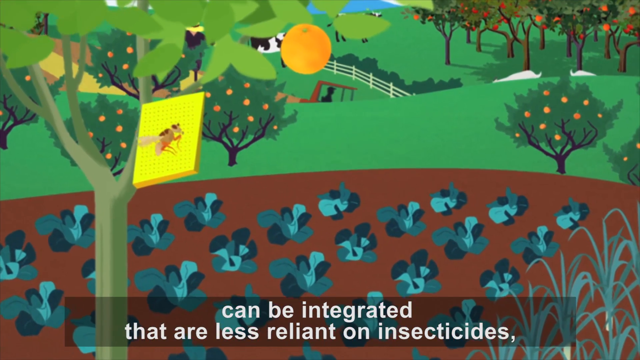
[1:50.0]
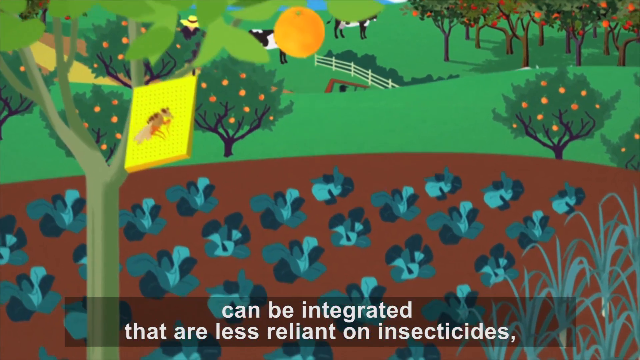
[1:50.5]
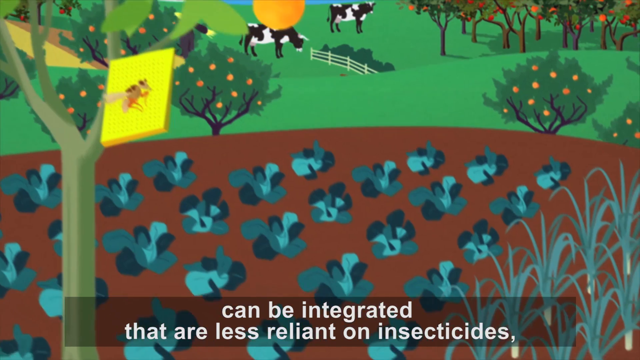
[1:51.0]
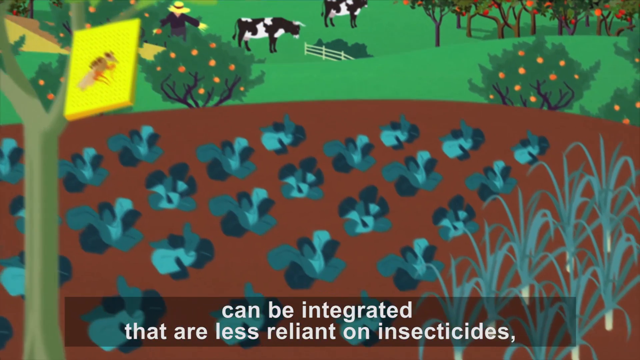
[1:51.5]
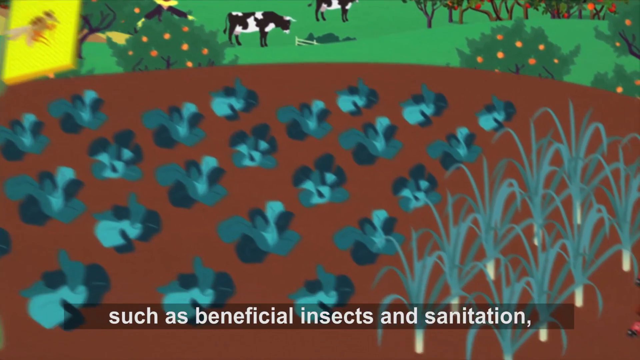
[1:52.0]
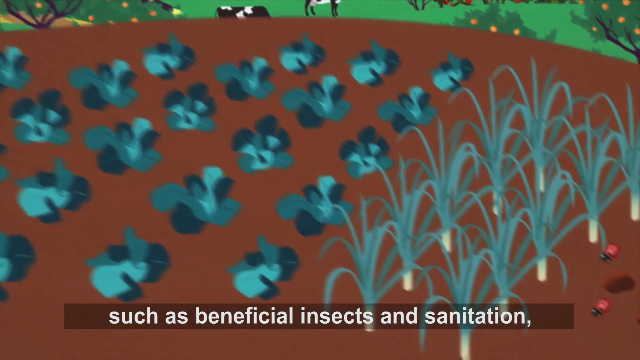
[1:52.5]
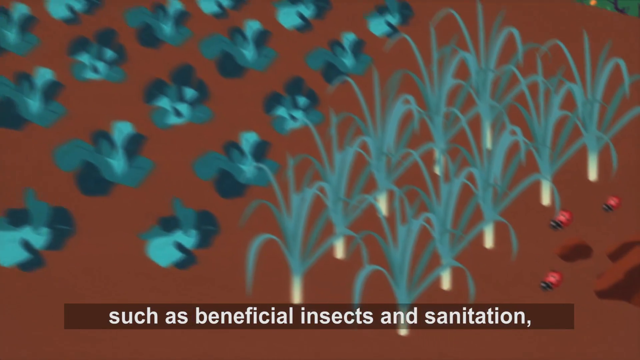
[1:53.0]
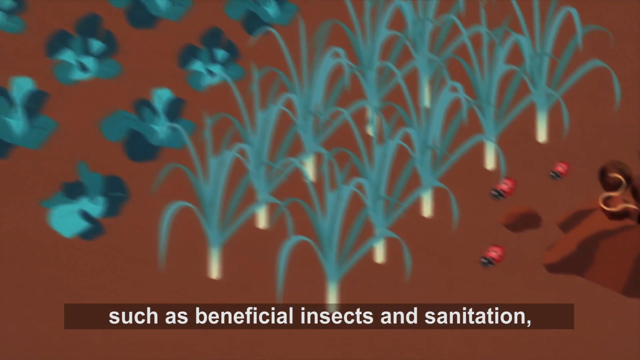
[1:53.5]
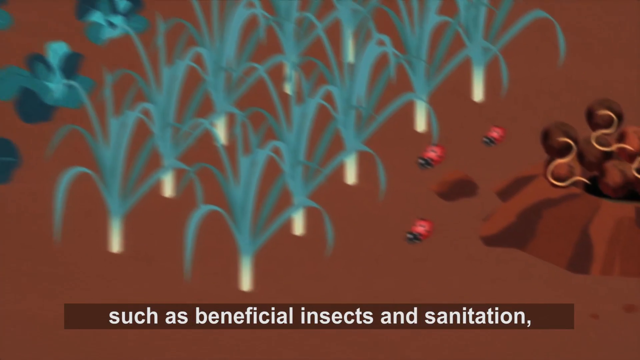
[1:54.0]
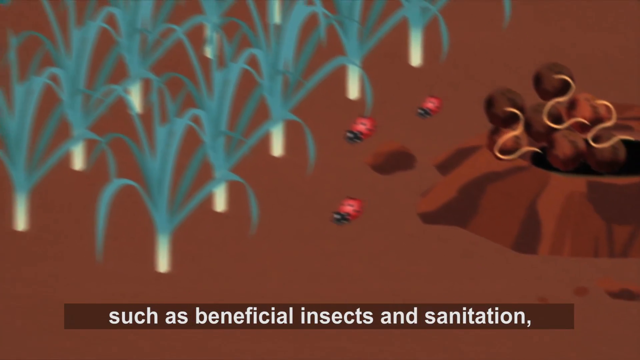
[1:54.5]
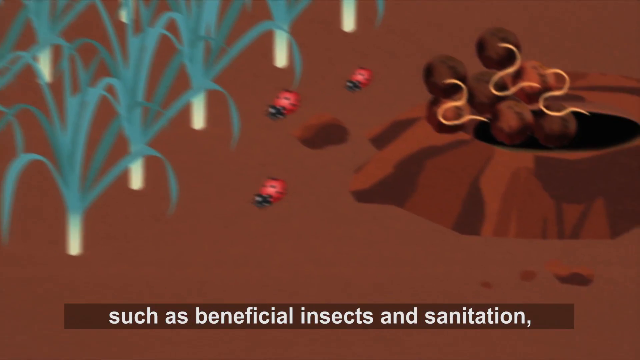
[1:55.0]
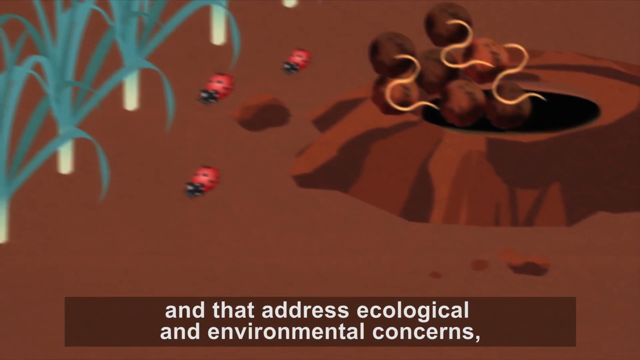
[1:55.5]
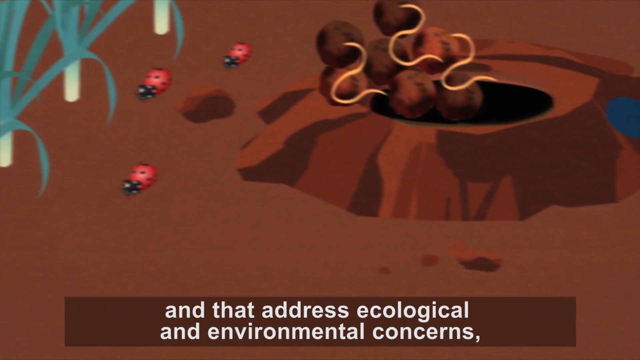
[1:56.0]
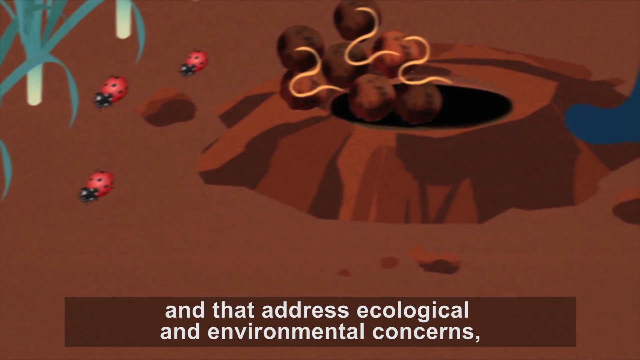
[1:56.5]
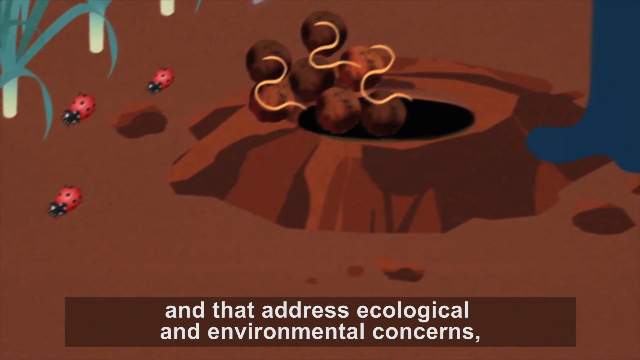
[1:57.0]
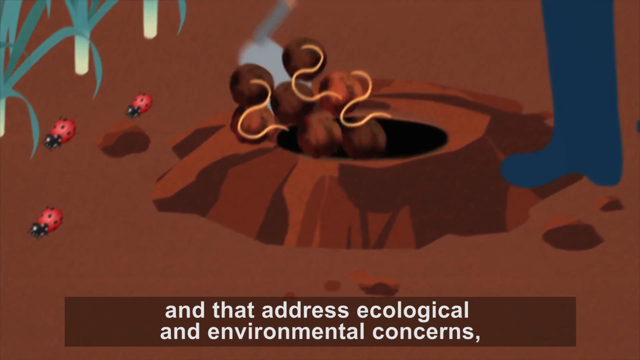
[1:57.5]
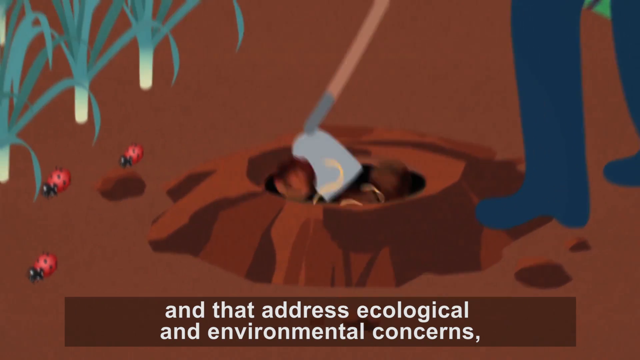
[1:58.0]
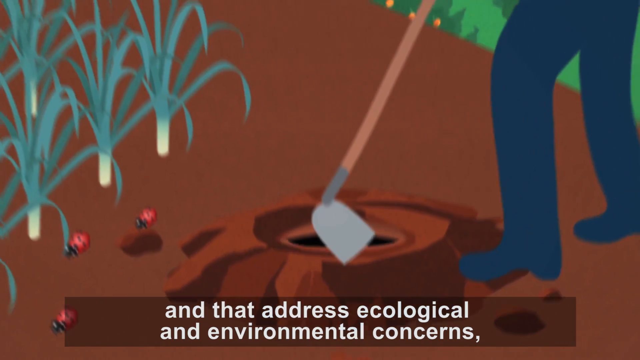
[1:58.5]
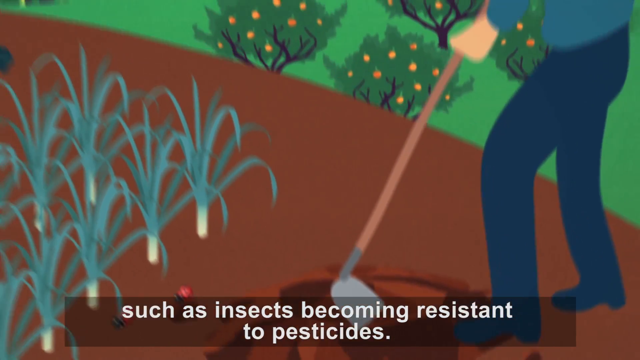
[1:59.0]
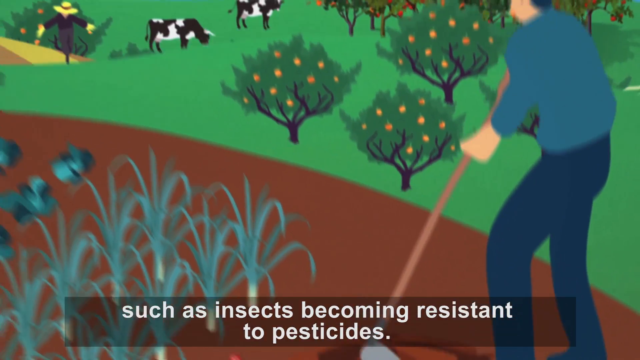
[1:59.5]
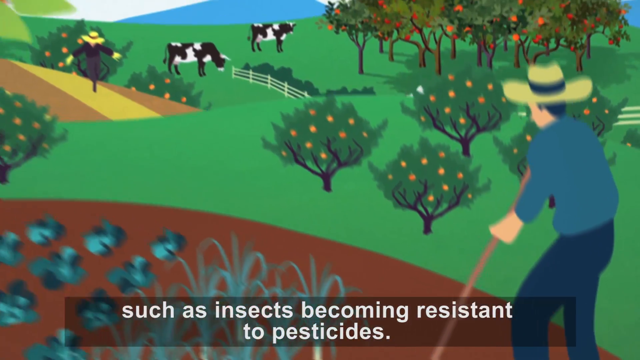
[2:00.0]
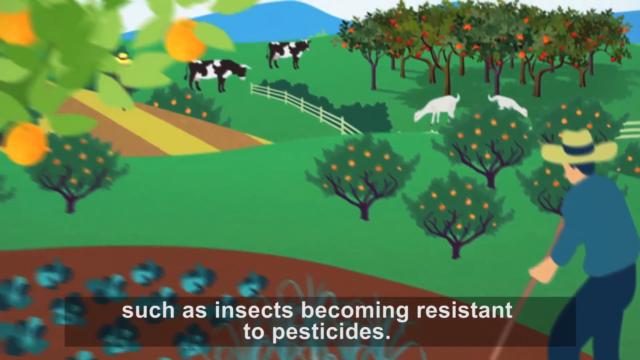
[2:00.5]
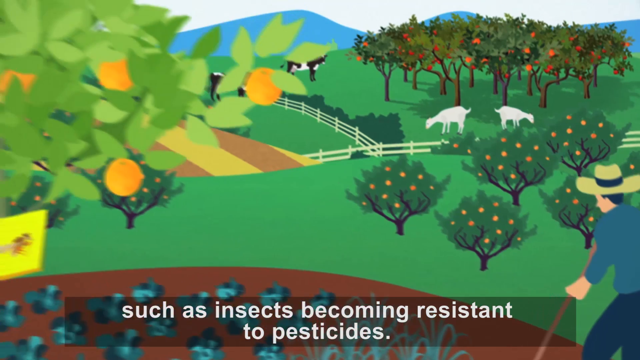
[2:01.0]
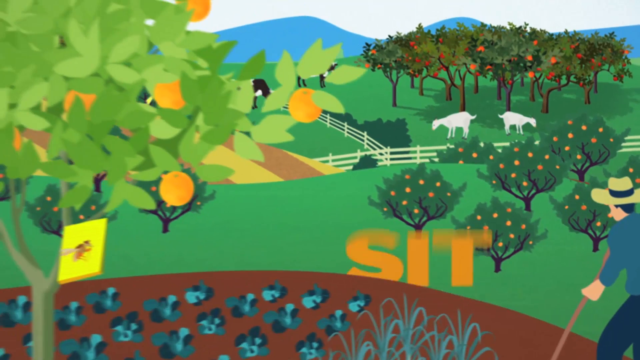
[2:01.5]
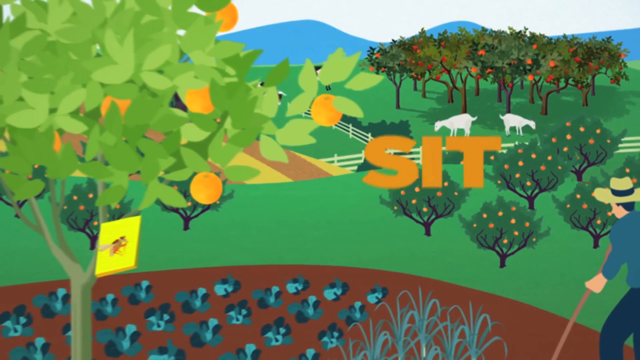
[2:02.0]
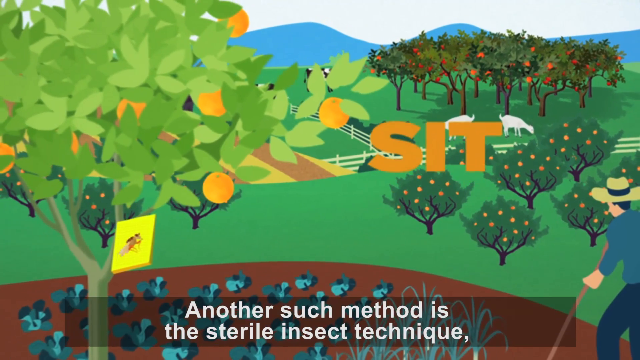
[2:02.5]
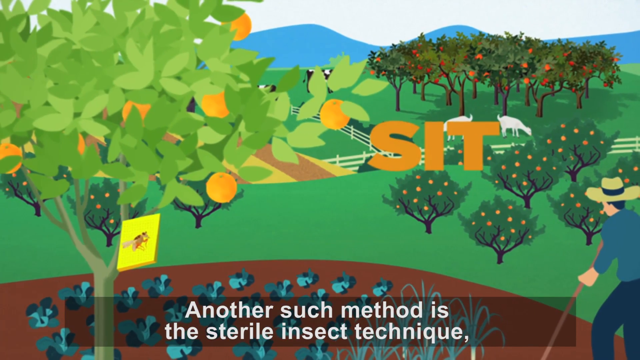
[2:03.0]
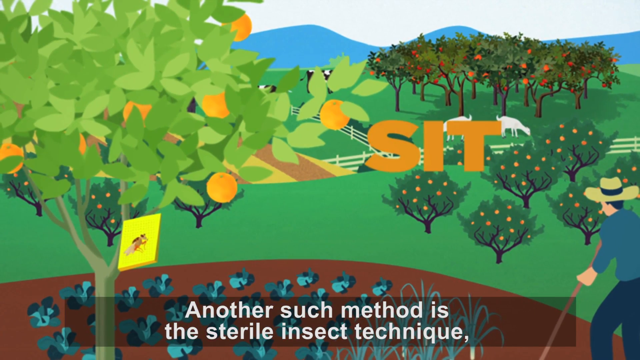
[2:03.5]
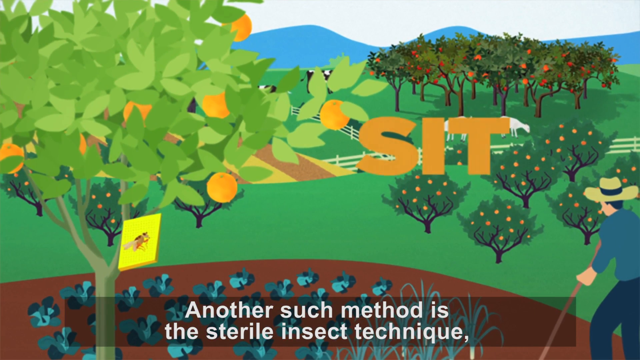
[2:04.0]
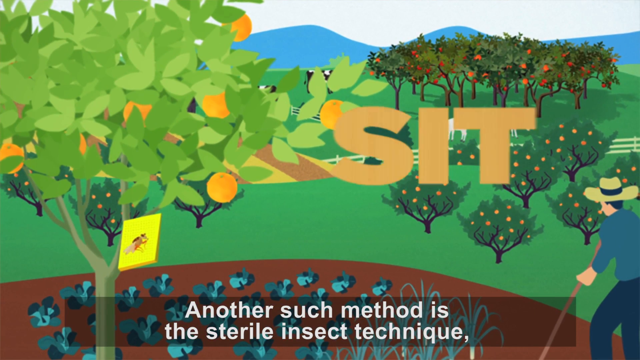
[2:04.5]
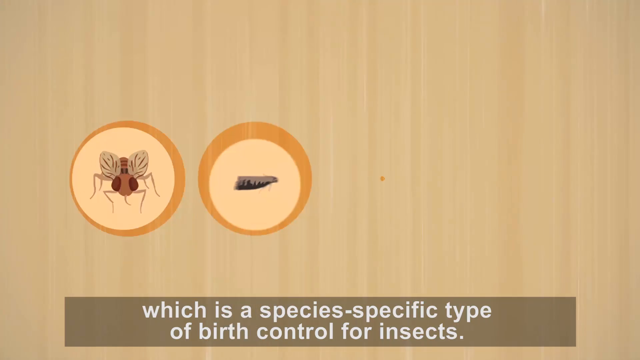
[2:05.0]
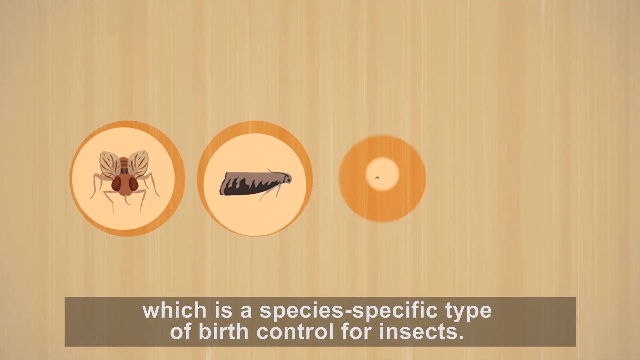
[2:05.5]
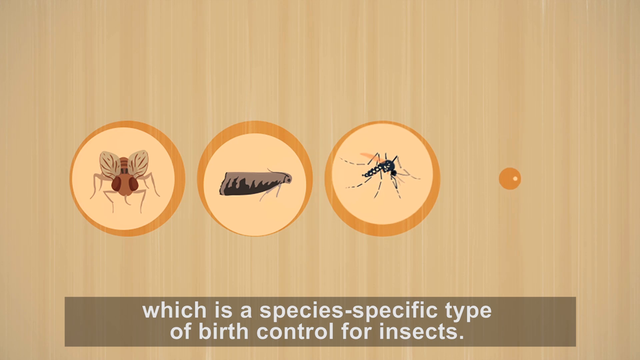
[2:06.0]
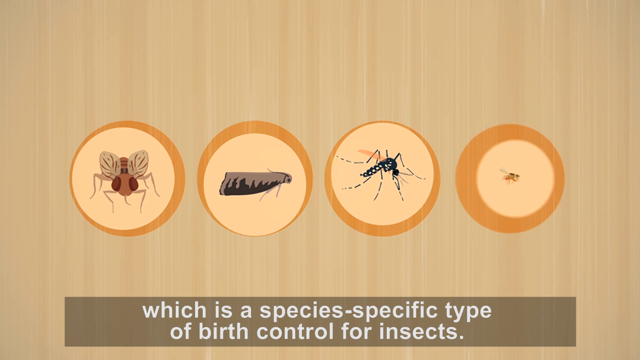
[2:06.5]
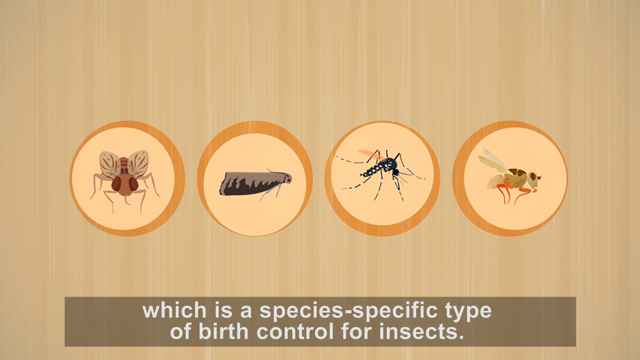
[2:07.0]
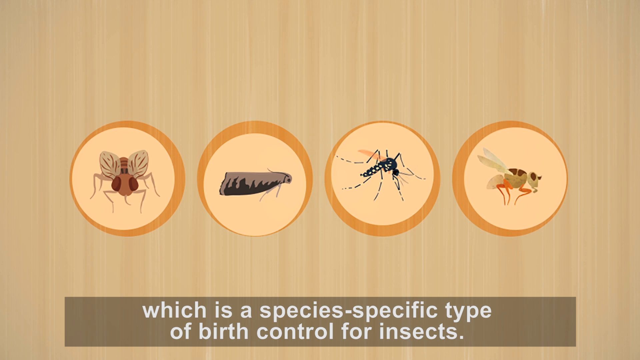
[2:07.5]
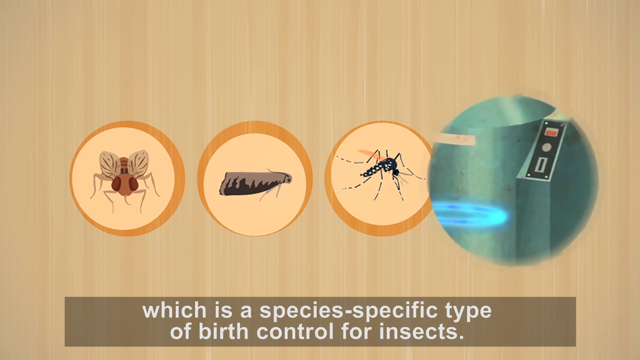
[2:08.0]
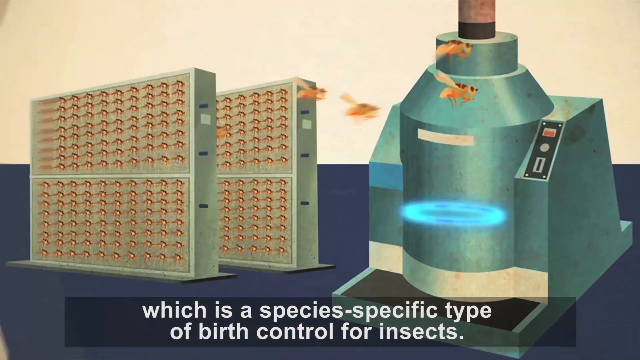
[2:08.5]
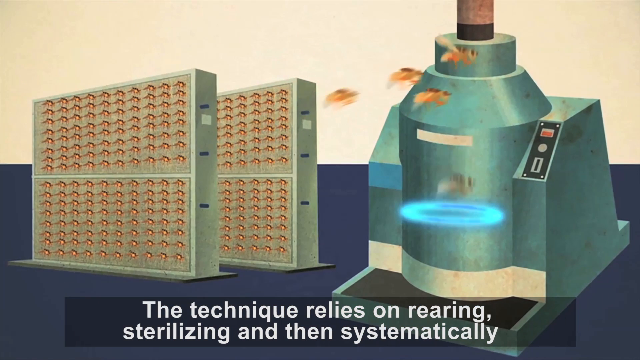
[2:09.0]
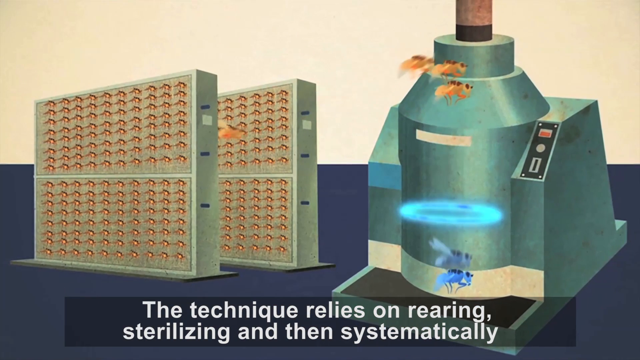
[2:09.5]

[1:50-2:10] The view pans down to the earth, showing different crops in the ground: next to the cabbage-like plants is a crop that looks like leeks, and next to the leeks are some ladybirds and possibly some worms. A farmer fills in some sort of hole. The word "sit" appears on the screen over the healthy ecosystem scene. Then a brown, maybe beige, screen appears with four circles: the first shows a bug that looks like a fly, the second a moth, the third potentially a mosquito, and the fourth some other kind of fly, possibly a tsetse fly. The scene switches to a different screen with two squares divided in half, with what look like bugs in the halves, possibly some kind of bug farm. The bugs seem to be released from the squares, though this is not entirely clear, and they fly toward some sort of machine where they are seemingly treated with some sort of blue light.